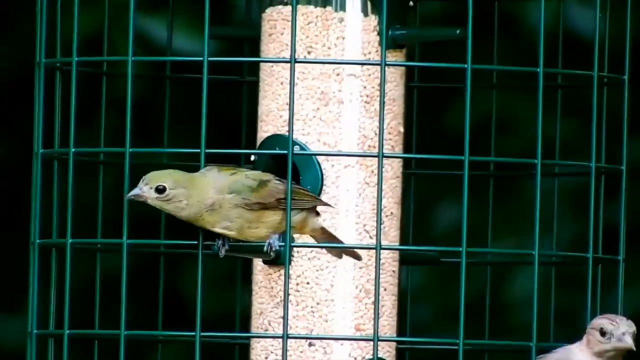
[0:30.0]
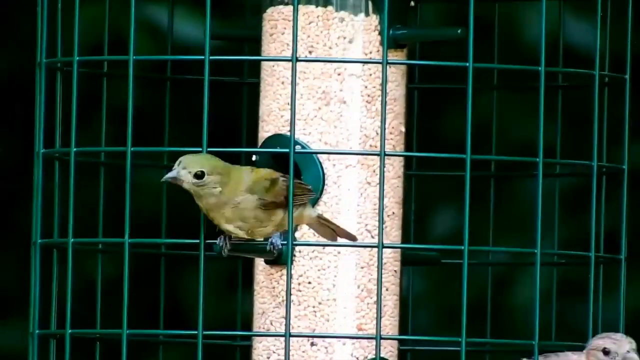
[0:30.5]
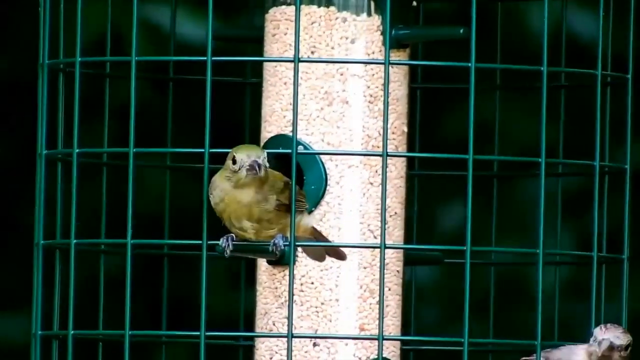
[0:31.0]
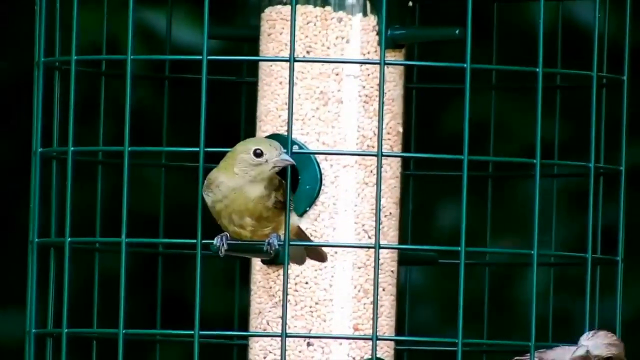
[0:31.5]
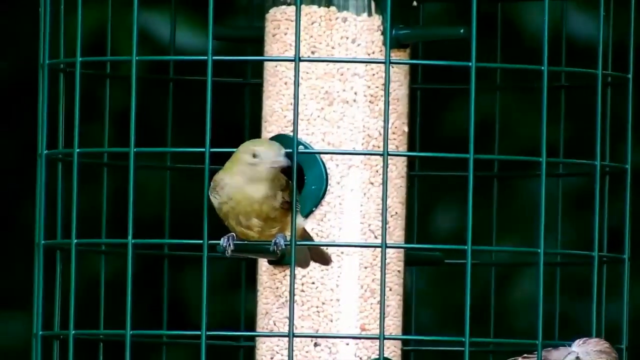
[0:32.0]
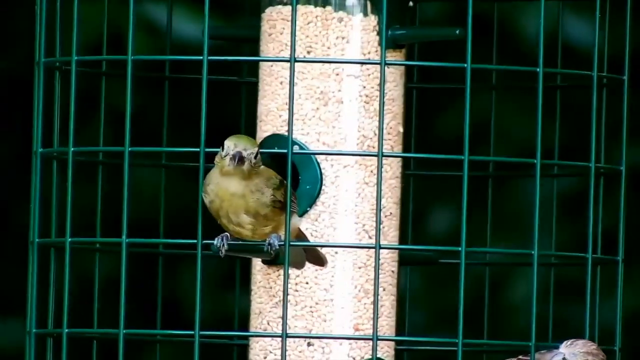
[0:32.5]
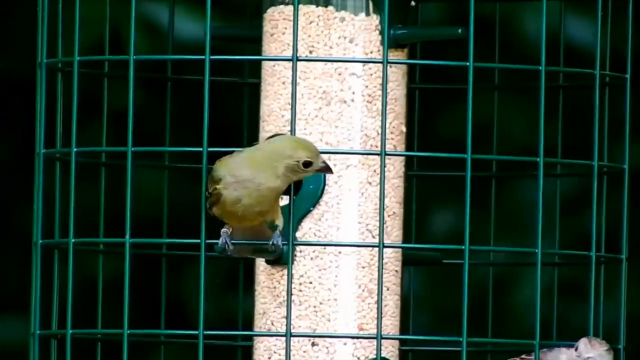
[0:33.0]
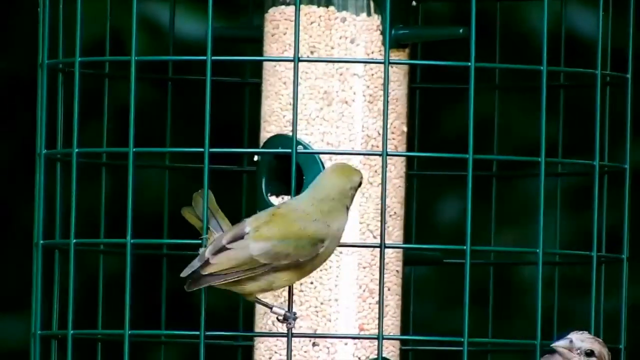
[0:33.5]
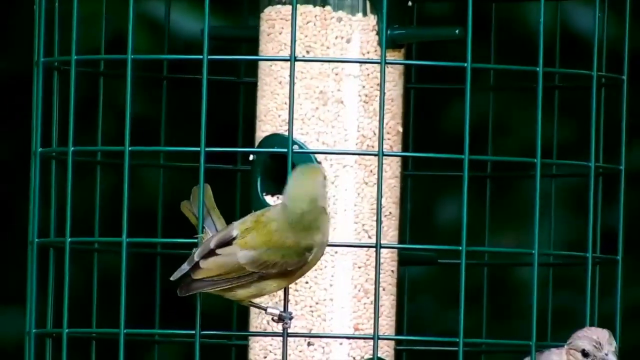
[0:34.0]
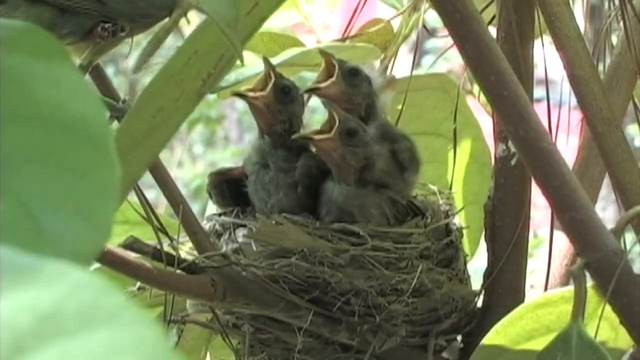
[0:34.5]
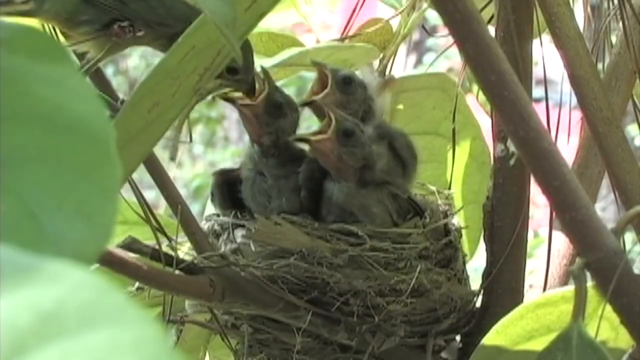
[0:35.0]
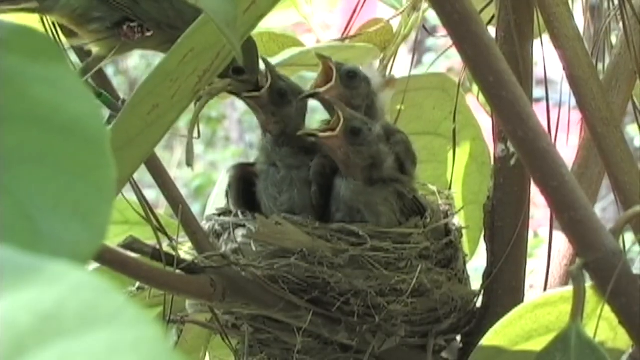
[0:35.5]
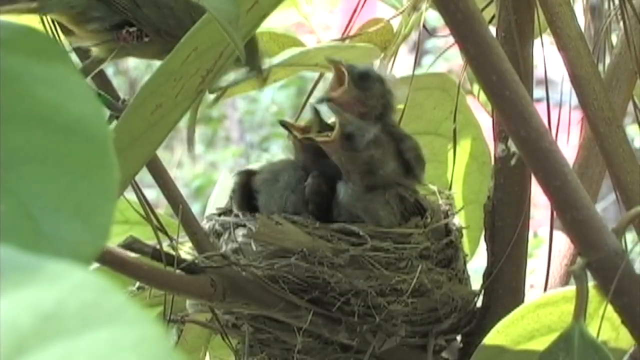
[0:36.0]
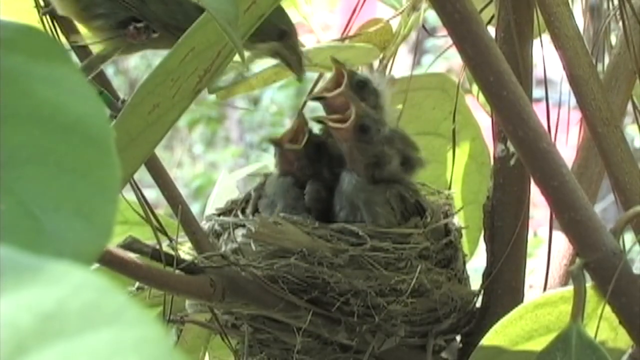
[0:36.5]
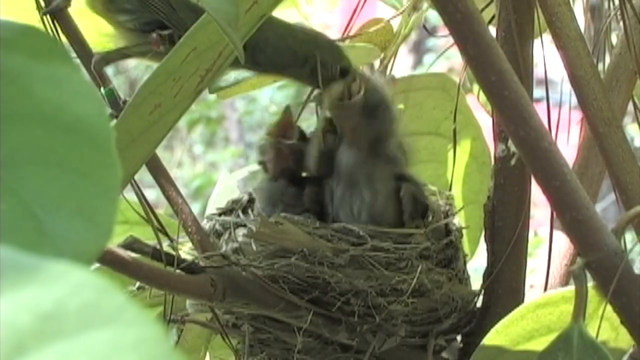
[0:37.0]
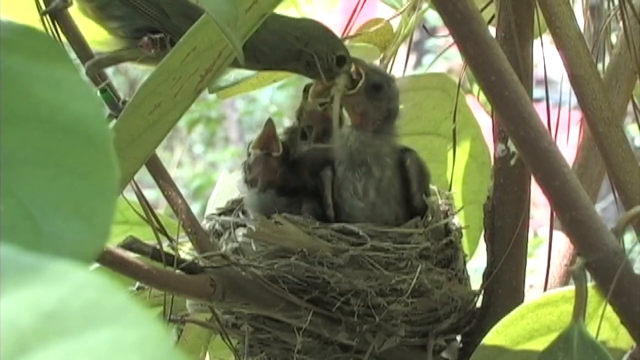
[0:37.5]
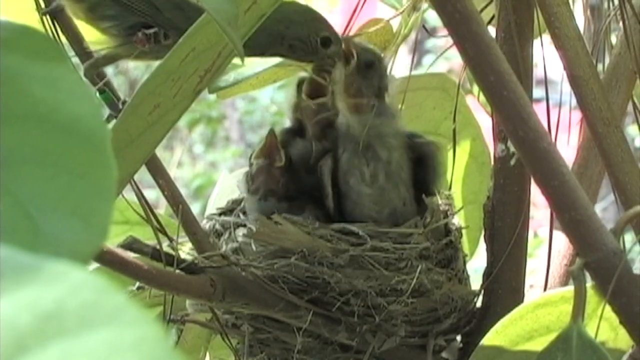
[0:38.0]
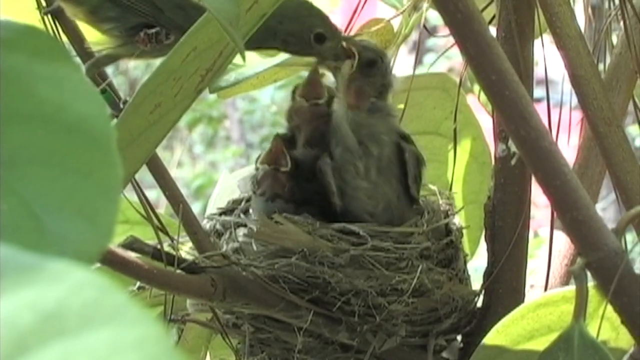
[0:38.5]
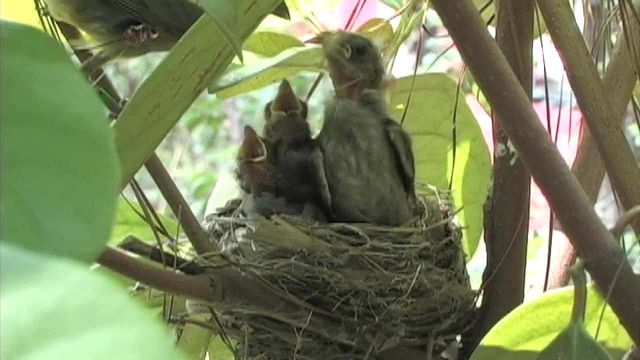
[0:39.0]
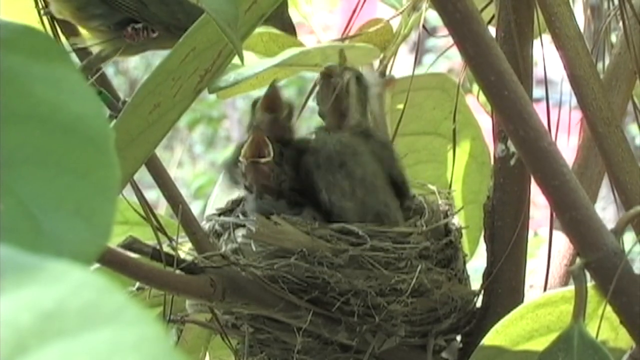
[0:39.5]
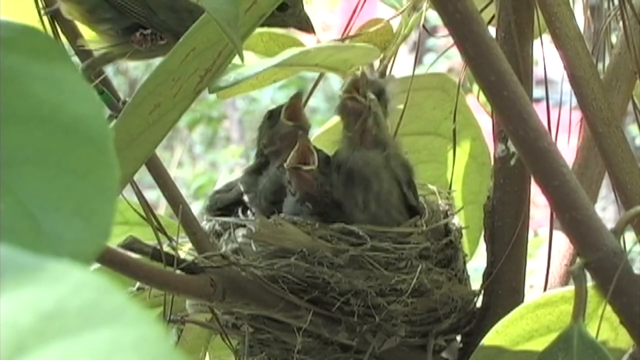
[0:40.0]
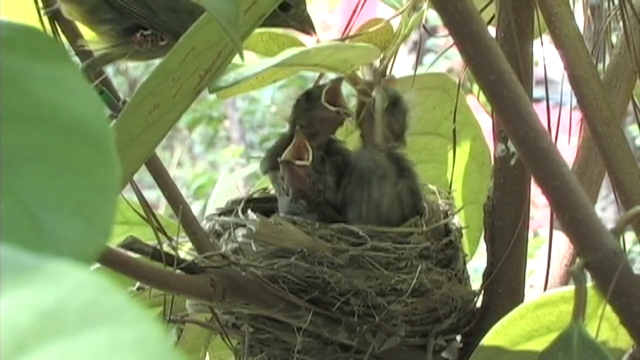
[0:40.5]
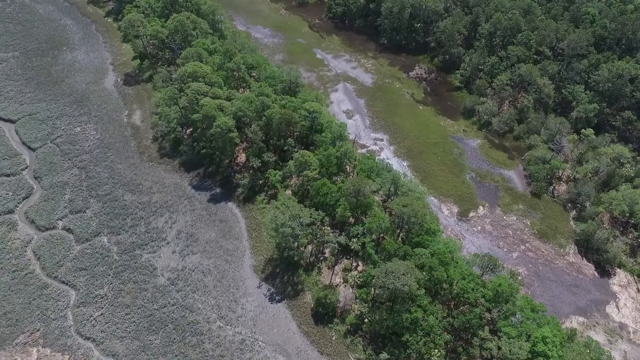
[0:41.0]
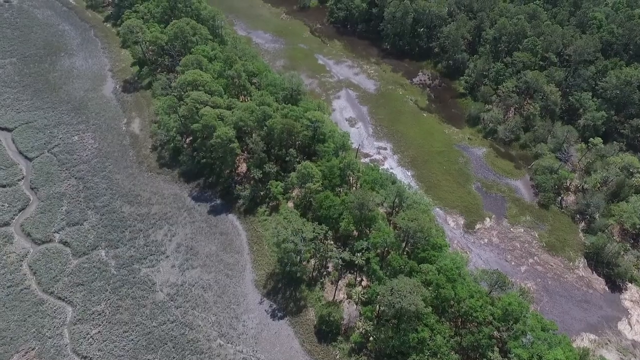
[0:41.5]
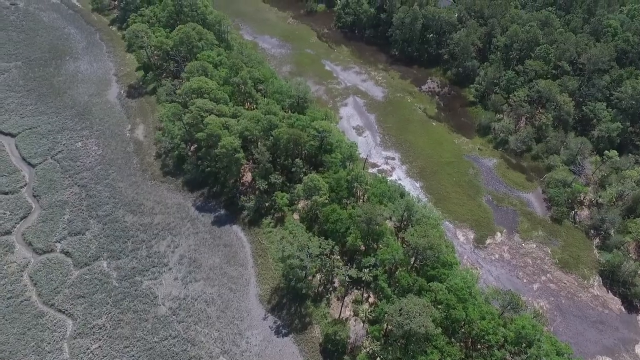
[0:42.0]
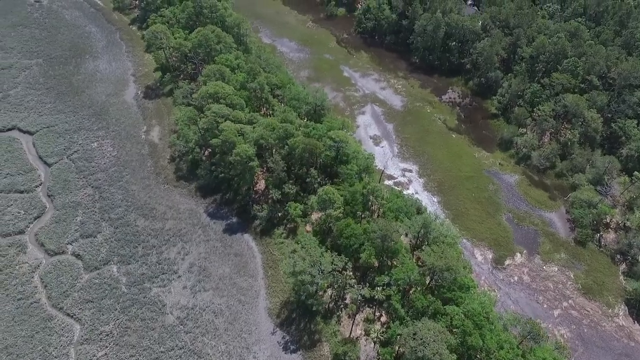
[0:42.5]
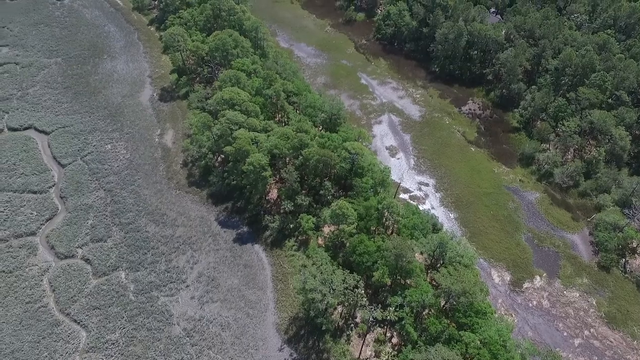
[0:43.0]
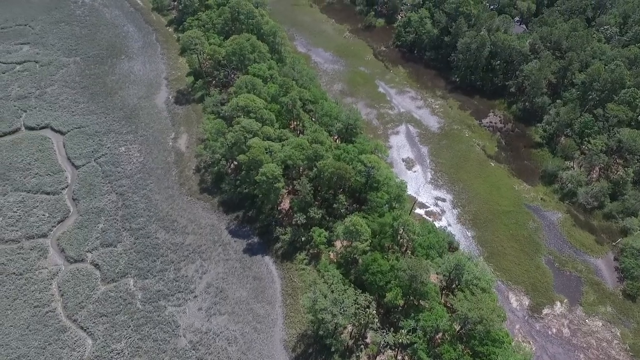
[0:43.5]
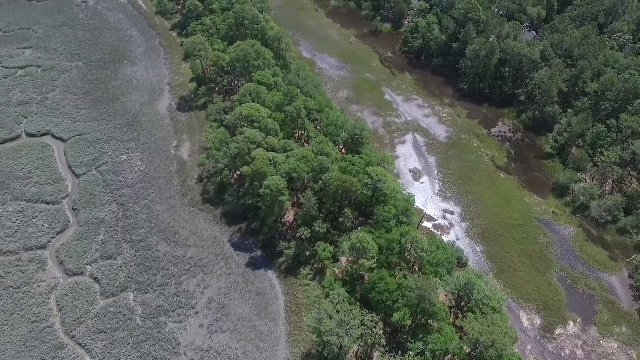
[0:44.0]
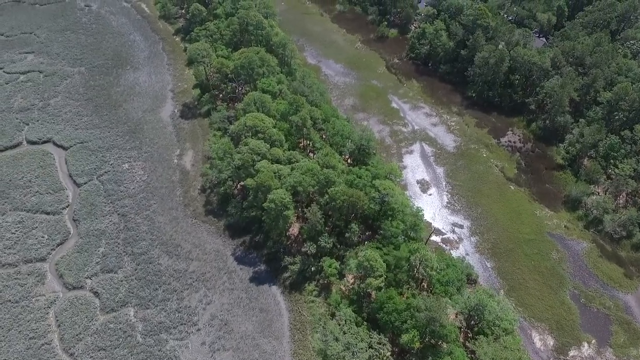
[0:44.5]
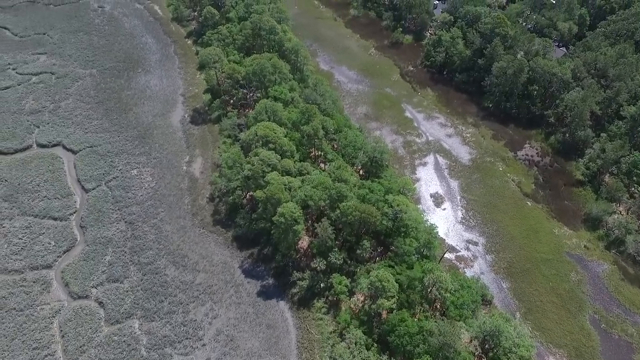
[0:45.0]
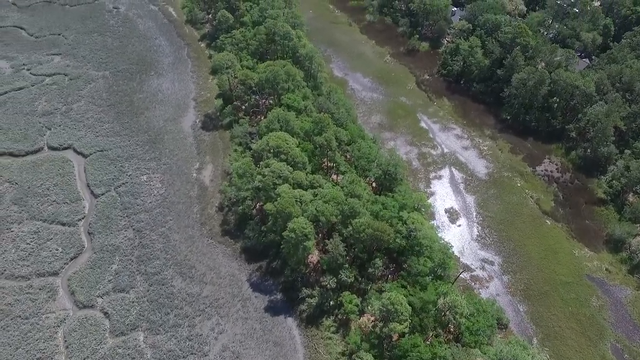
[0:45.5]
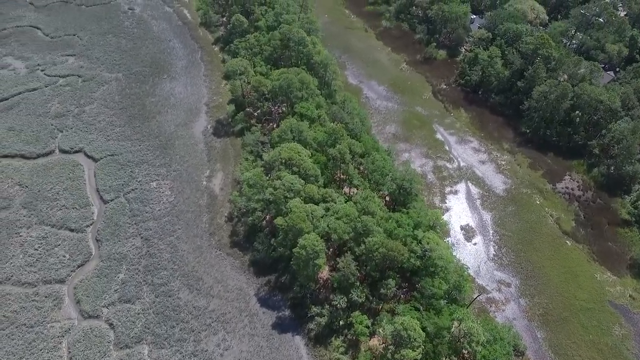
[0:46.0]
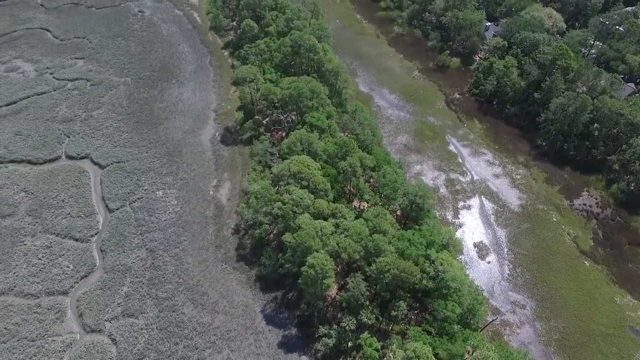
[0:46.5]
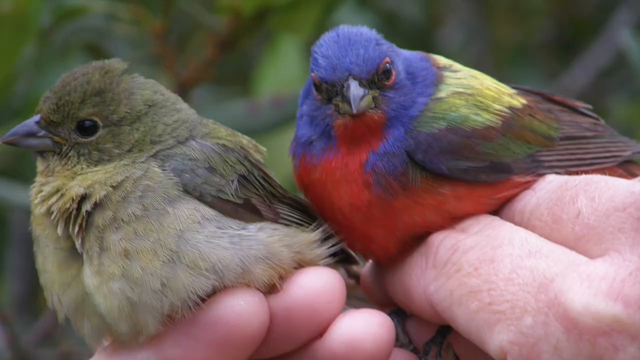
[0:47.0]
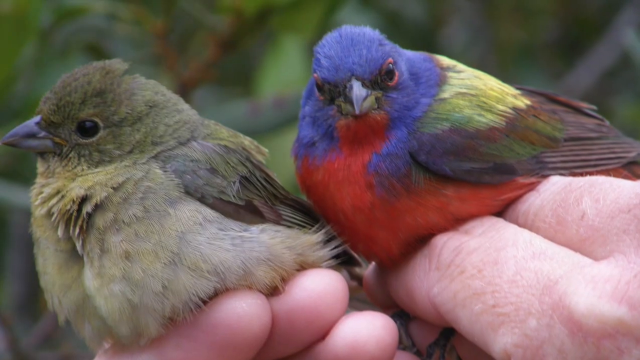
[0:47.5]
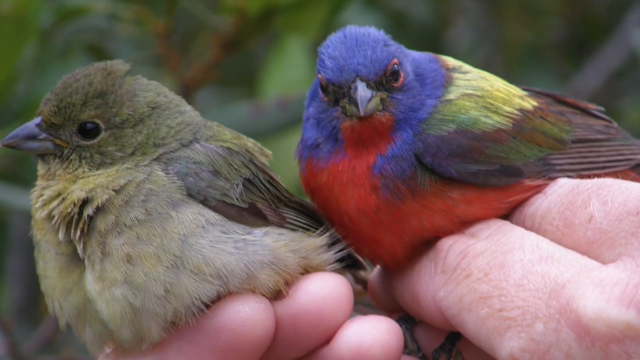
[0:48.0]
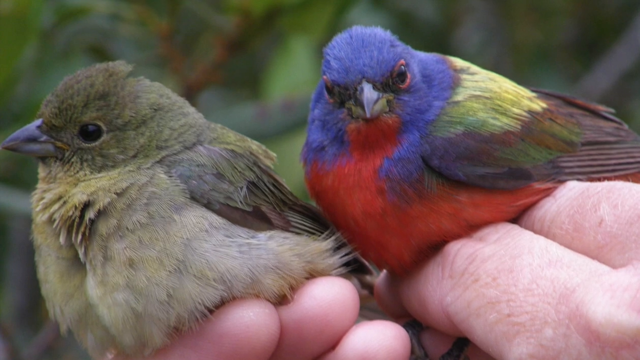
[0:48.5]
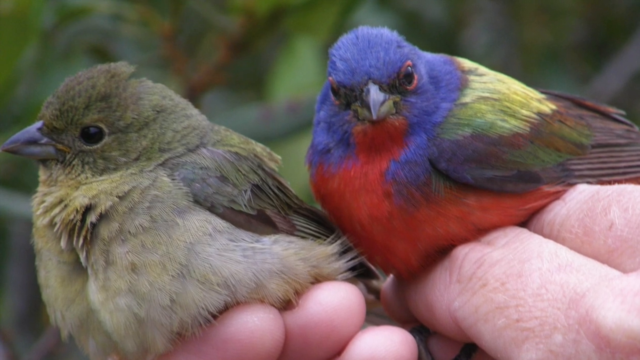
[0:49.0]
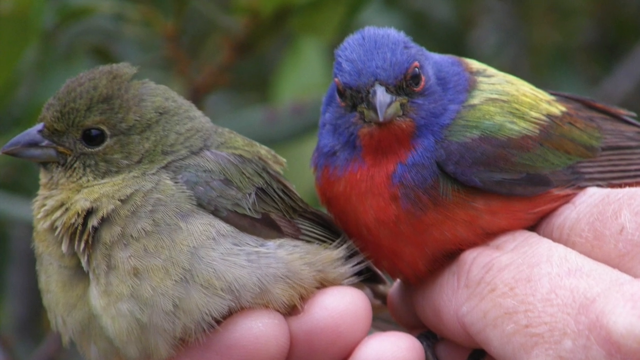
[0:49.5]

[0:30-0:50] A green bird at the seed feeder looks out, sitting on the green wire of the caged area around the seed feeder. It is an olive green colour with green and black wings and large beady black eyes. Next is a close-up of a bird's nest with three chicks, their mouths open waiting for food. A parent arrives and feeds the chick on the left, then the one on the right; one chick does not get food this time. An aerial shot then shows a river with trees on either side and an area of wetland on the left with curved streams running through it. Then a person's hand holds the blue-headed bird with the red breast and yellow wings, and the grey-green bird. Both look puffed up and fluffy.